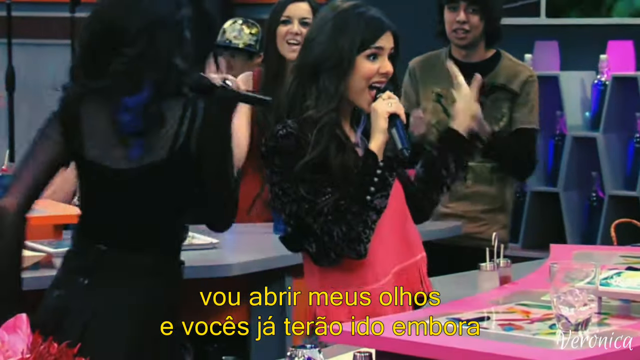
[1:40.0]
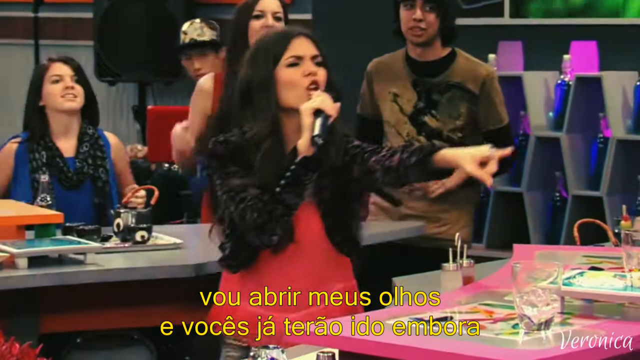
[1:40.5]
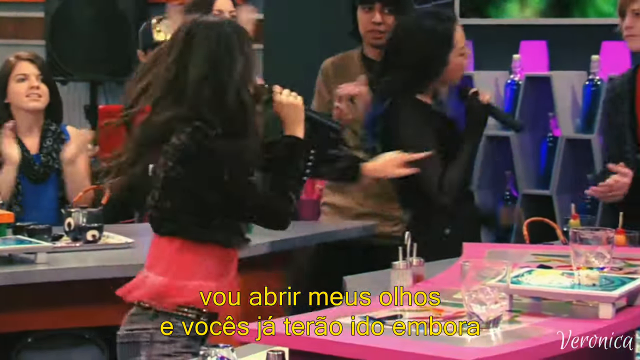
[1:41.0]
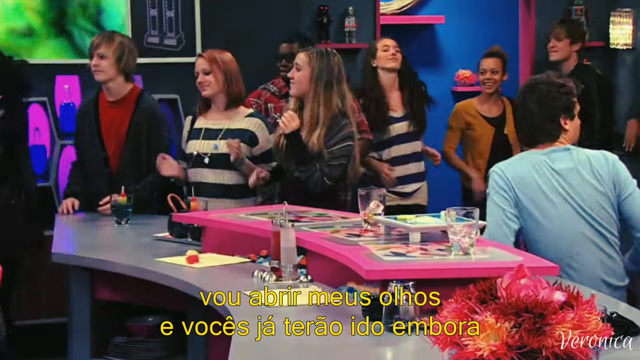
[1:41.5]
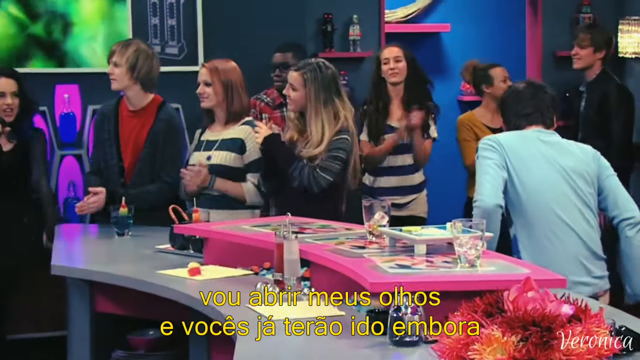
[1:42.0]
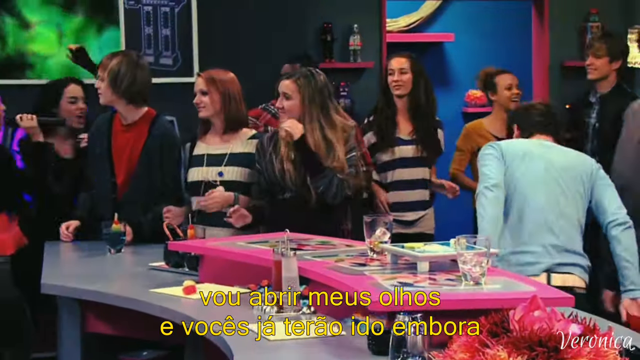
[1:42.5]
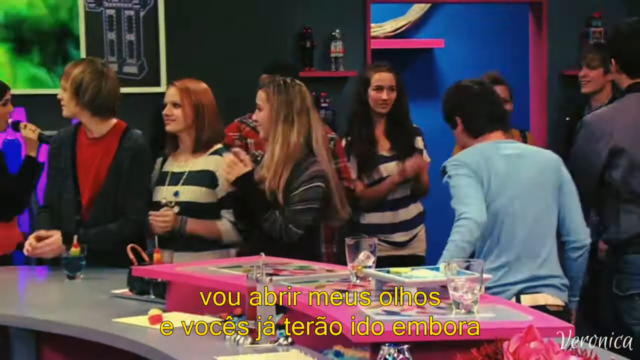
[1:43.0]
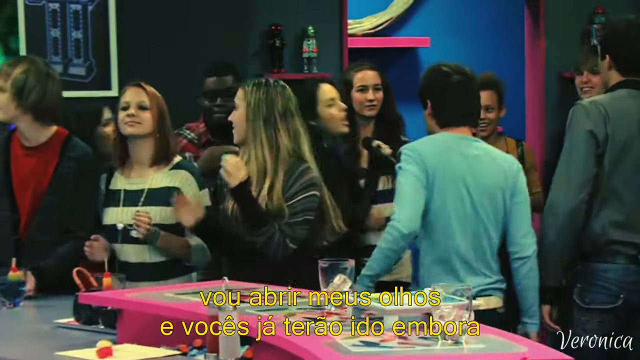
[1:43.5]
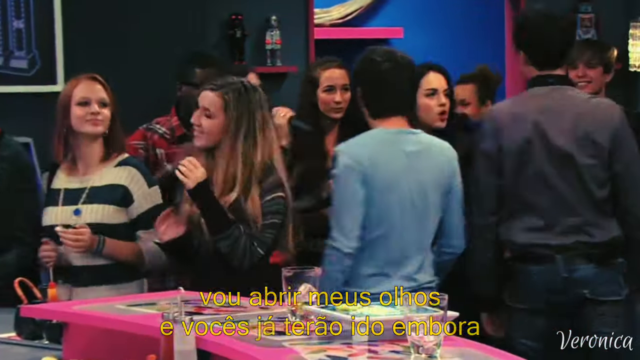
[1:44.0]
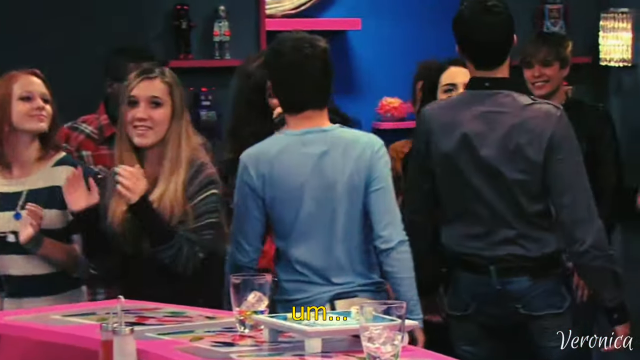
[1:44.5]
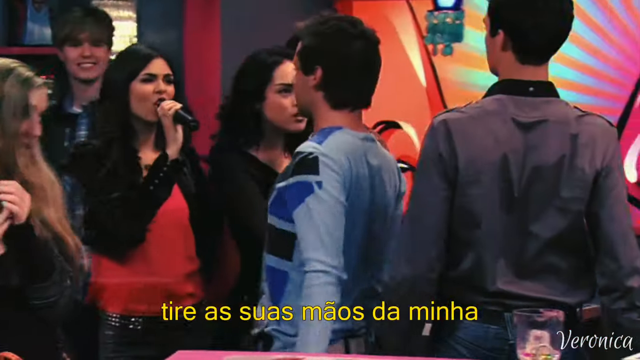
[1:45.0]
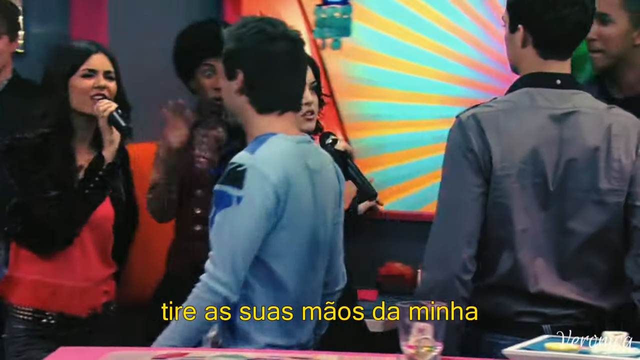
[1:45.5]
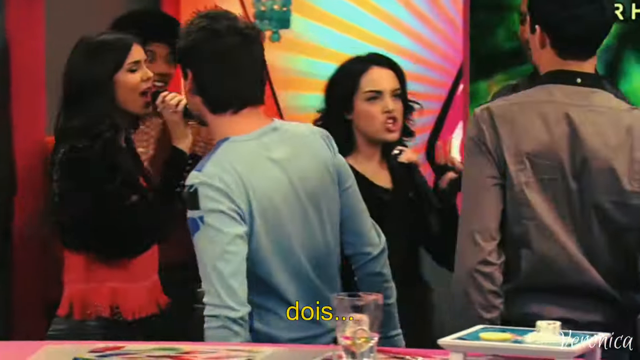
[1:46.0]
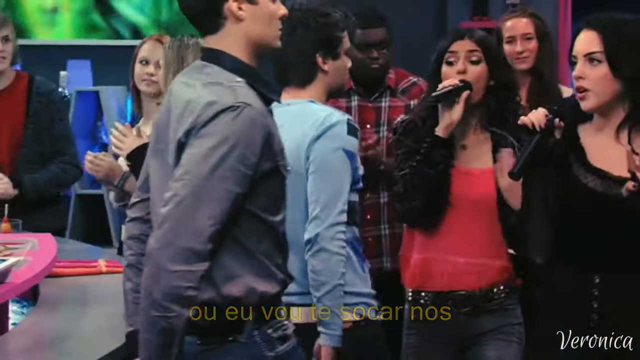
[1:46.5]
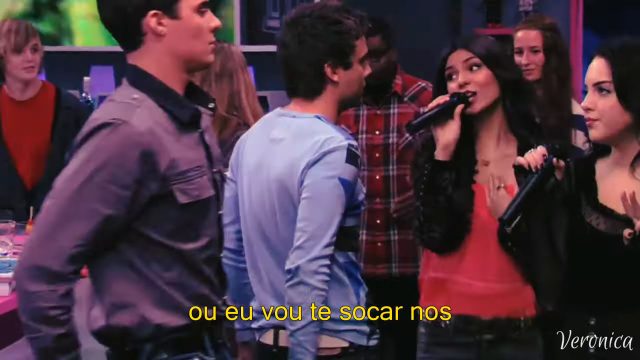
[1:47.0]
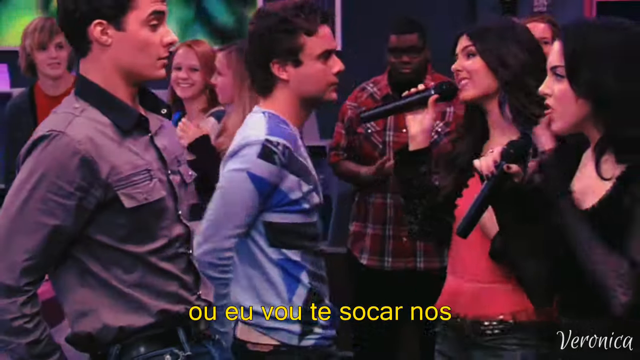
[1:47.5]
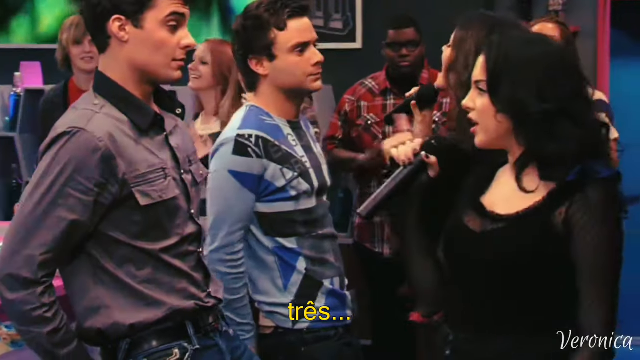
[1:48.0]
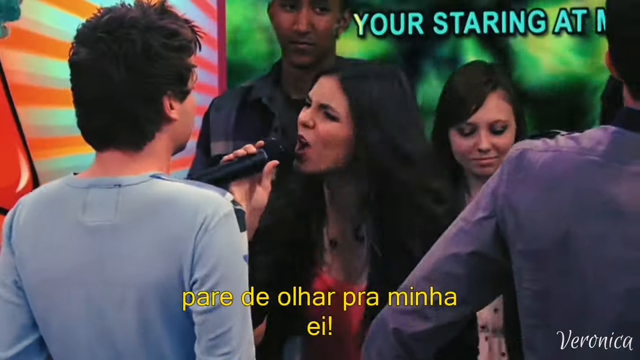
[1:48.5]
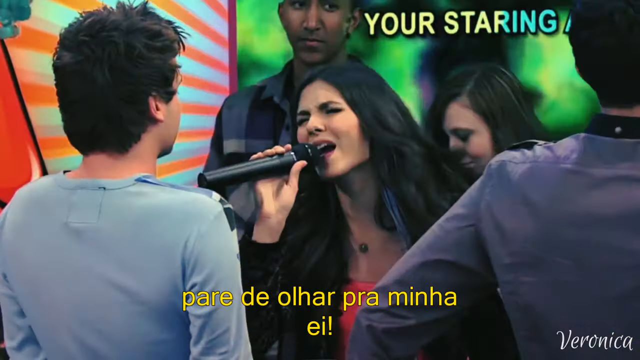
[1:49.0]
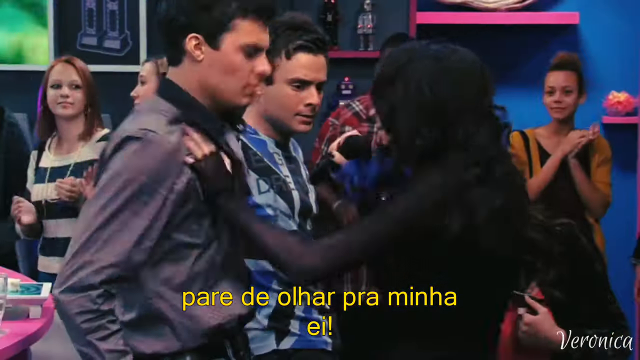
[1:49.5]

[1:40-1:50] After saying goodbye, the two women run back toward the center of the group and stop the two guys, who were trying to leave, still singing karaoke at them. One woman, apparently the one in the all-dark shirt, stops the tall man in the dark shirt, sings at him aggressively, and suddenly smacks him on the shoulder, while the woman in the pink and black shirts sings to the guy in the blue British shirt. The audience sits clapping and dancing along. The women keep aggressively holding their microphones in the men's faces. The man in the dark shirt, not expecting it, winces in pain after being struck. Both men appear kind of shocked and are just trying to leave, while the rest of the audience keeps clapping along.